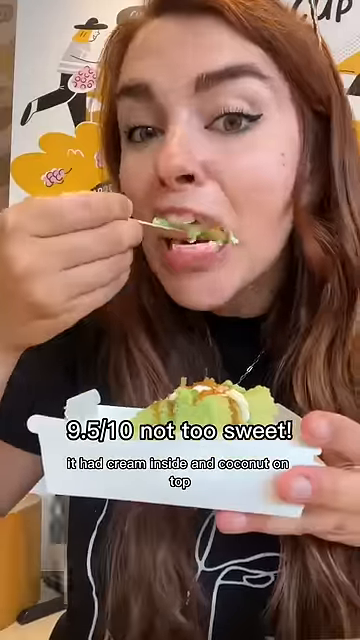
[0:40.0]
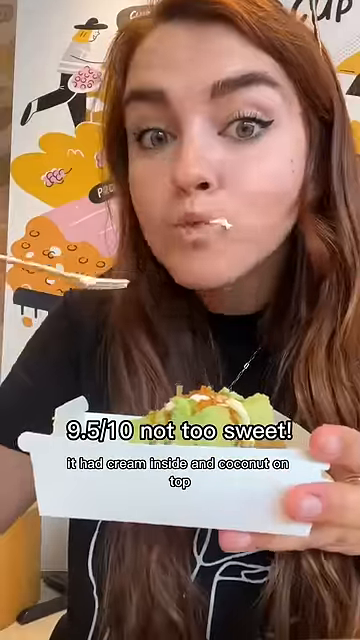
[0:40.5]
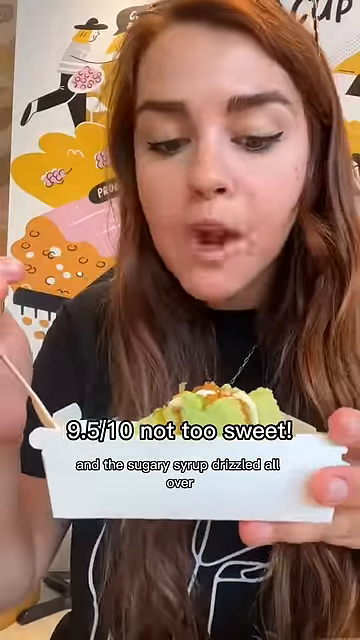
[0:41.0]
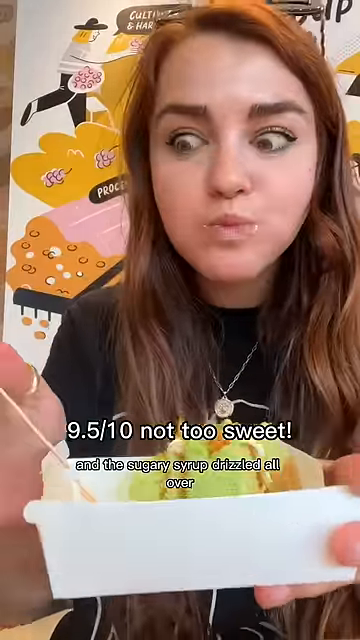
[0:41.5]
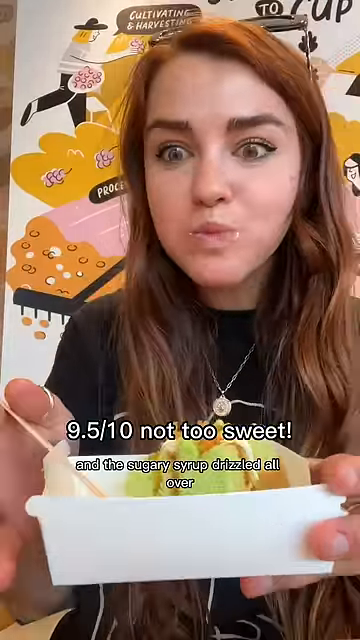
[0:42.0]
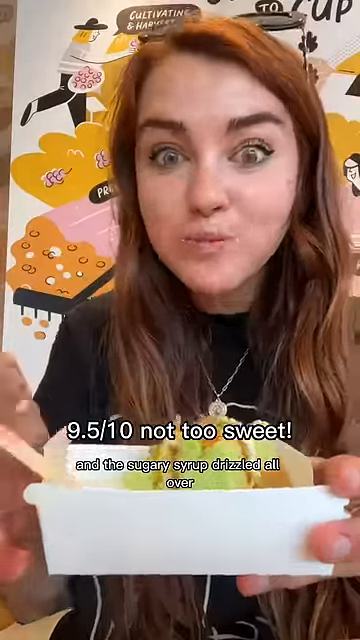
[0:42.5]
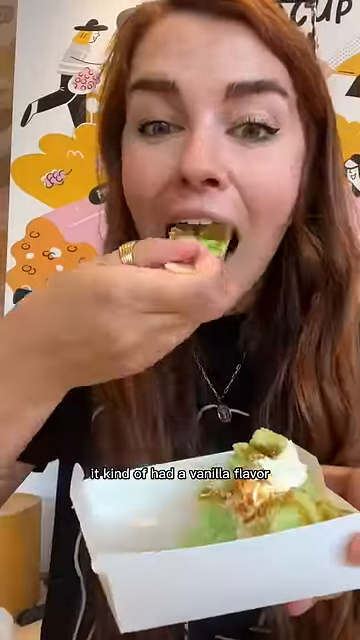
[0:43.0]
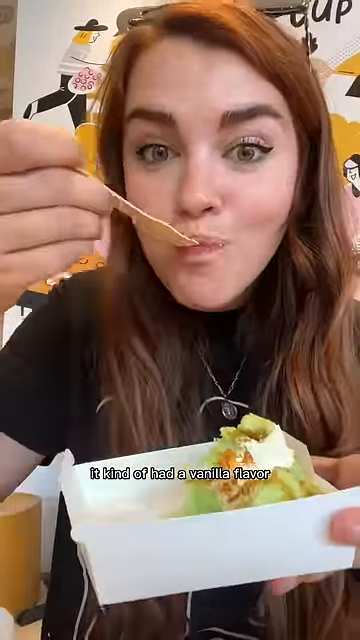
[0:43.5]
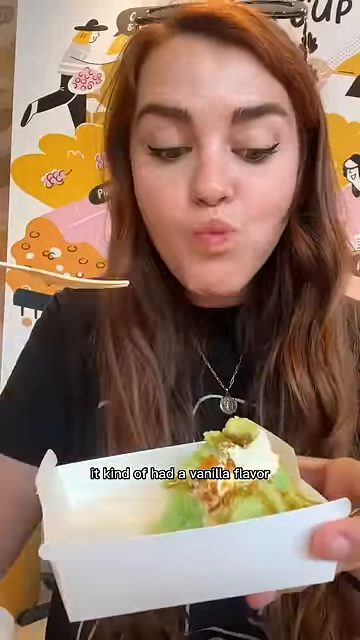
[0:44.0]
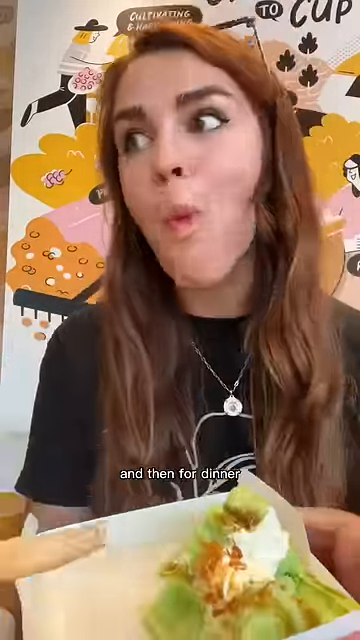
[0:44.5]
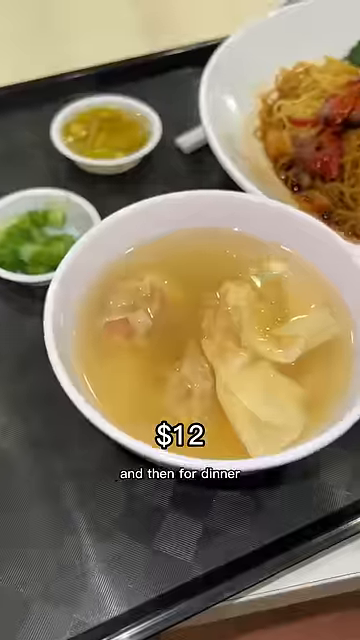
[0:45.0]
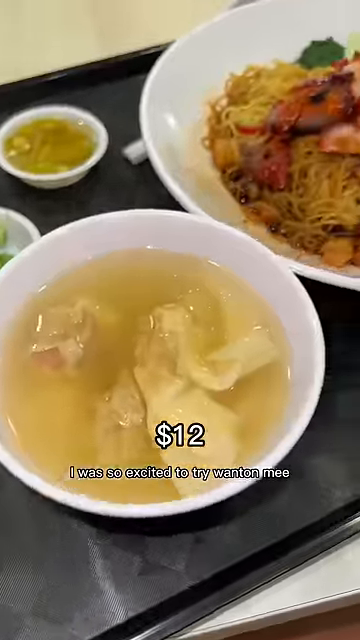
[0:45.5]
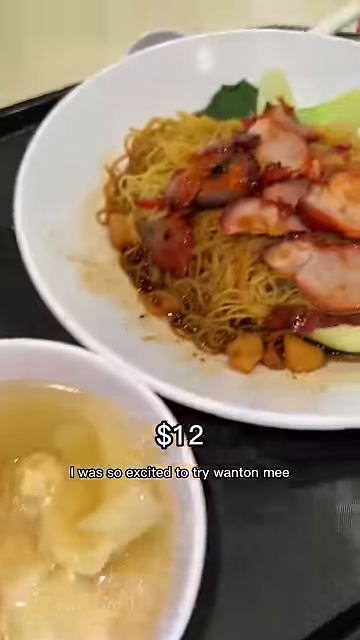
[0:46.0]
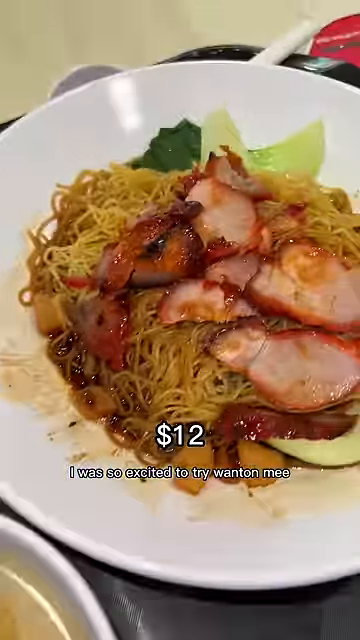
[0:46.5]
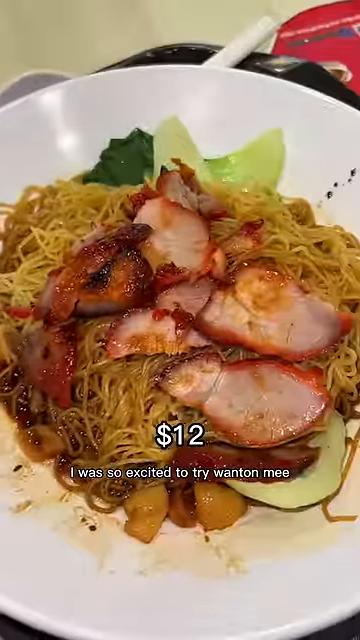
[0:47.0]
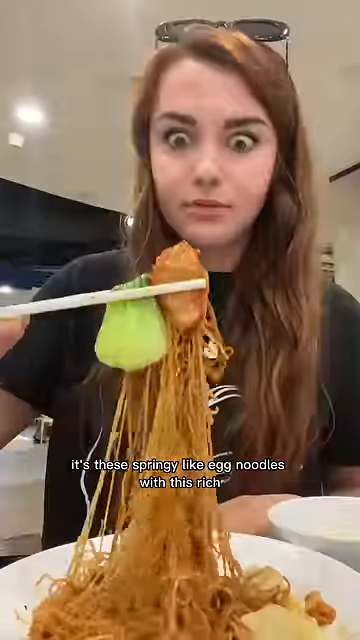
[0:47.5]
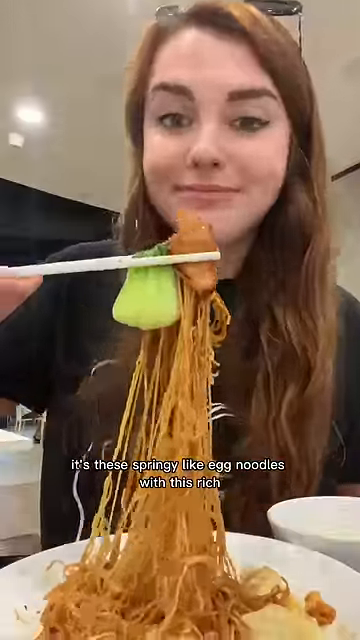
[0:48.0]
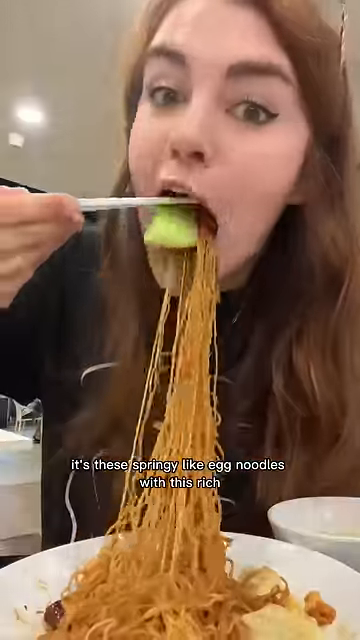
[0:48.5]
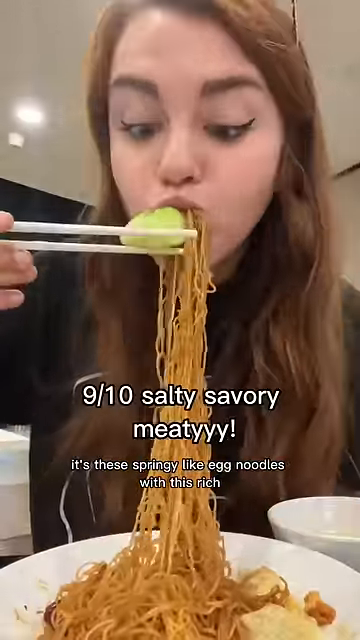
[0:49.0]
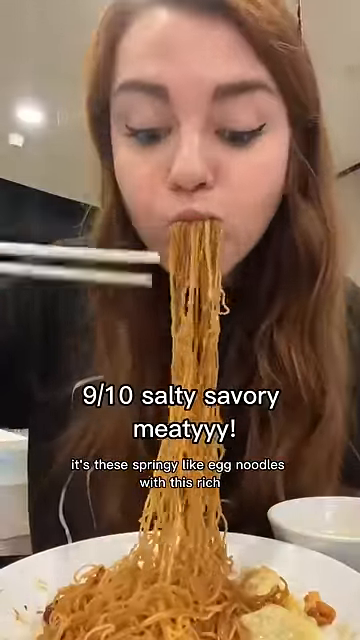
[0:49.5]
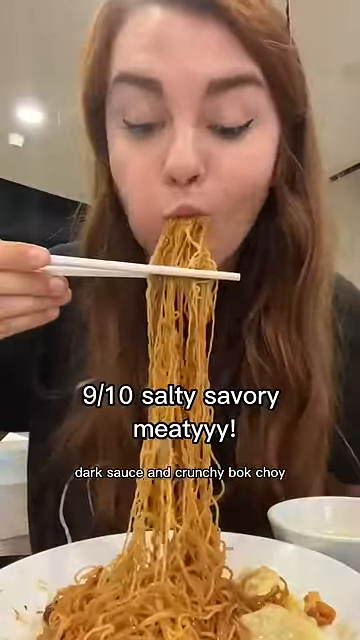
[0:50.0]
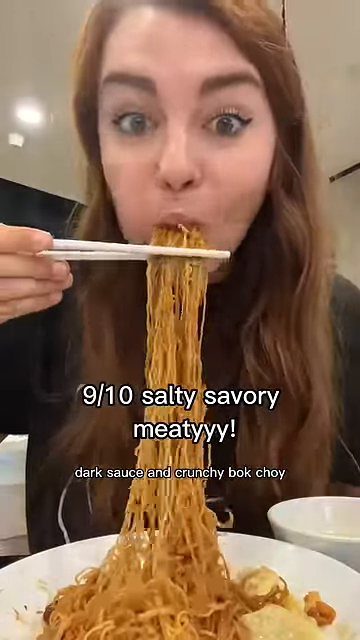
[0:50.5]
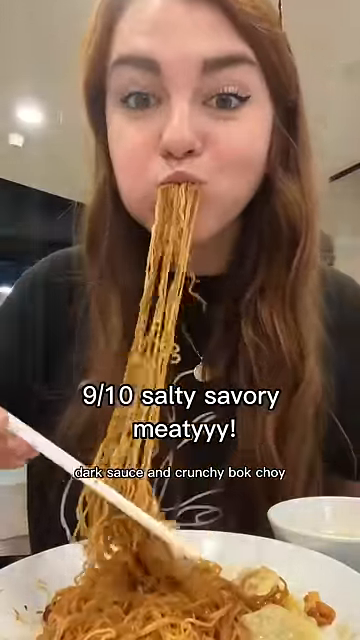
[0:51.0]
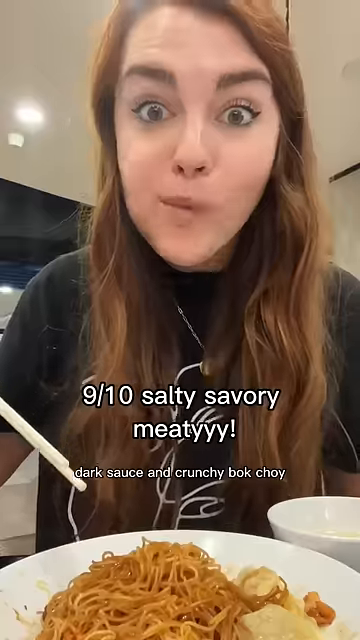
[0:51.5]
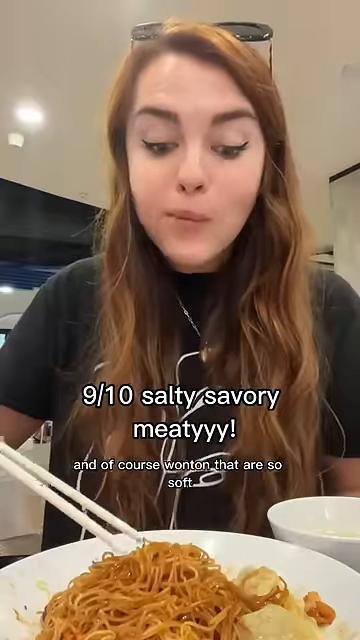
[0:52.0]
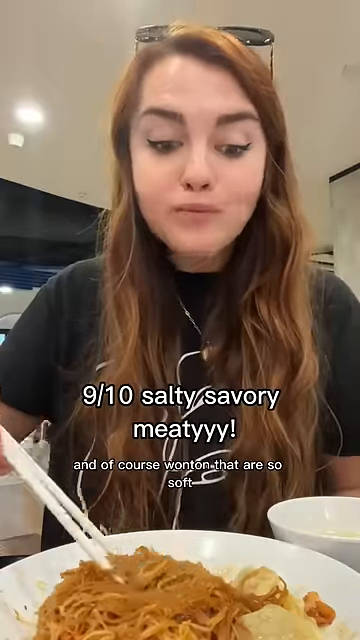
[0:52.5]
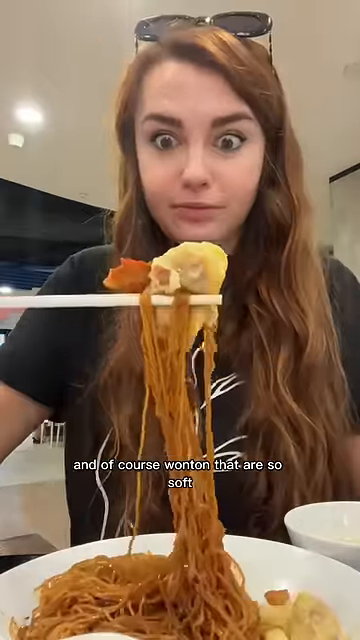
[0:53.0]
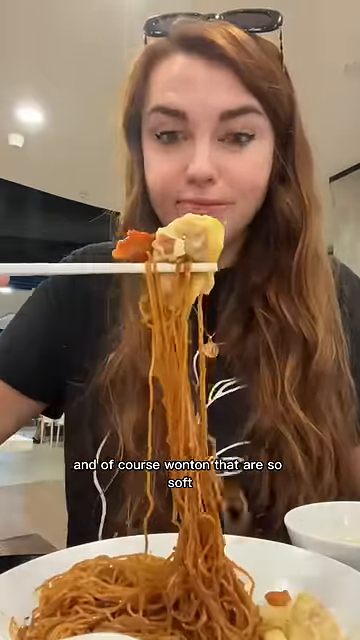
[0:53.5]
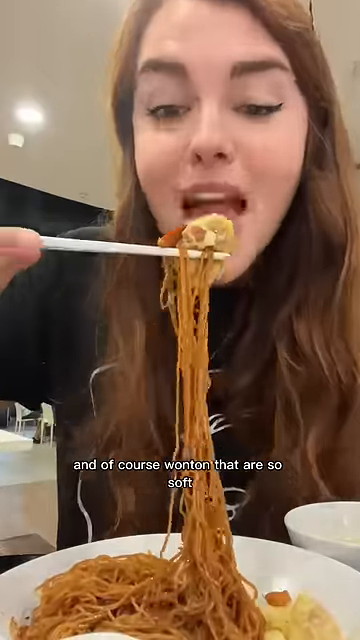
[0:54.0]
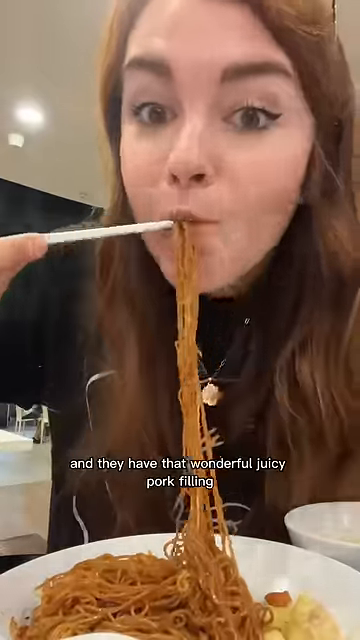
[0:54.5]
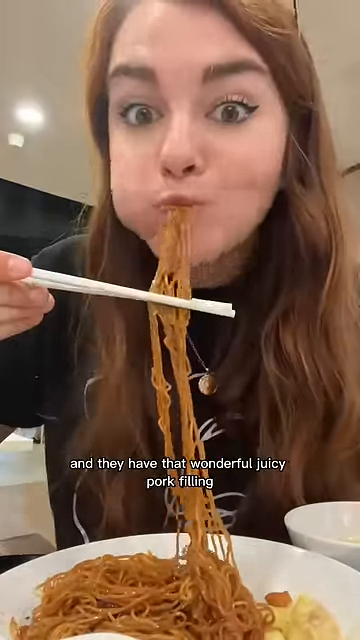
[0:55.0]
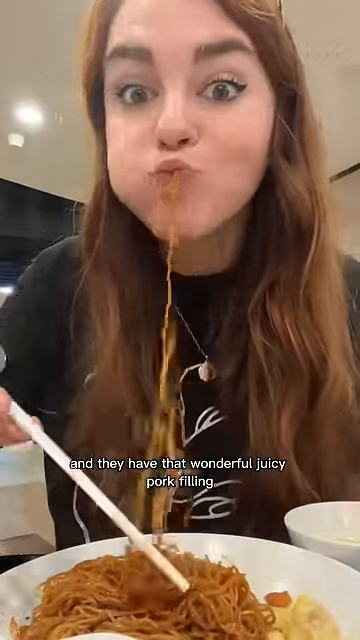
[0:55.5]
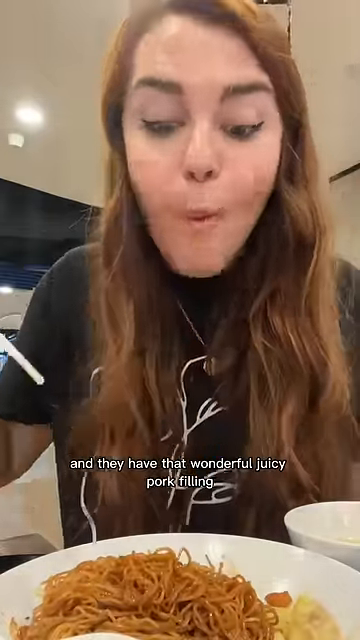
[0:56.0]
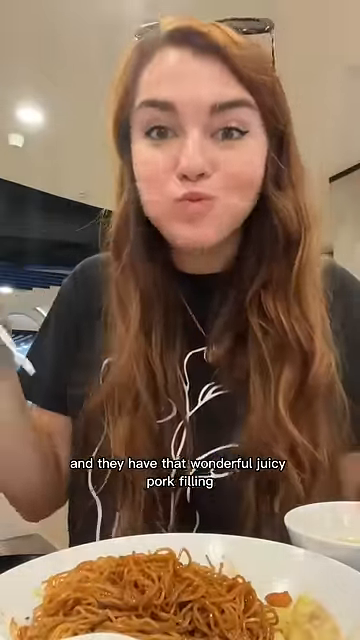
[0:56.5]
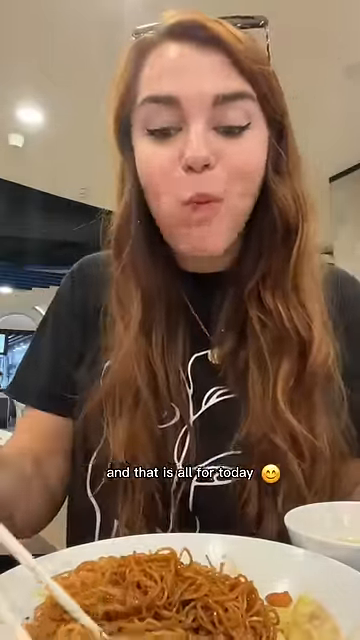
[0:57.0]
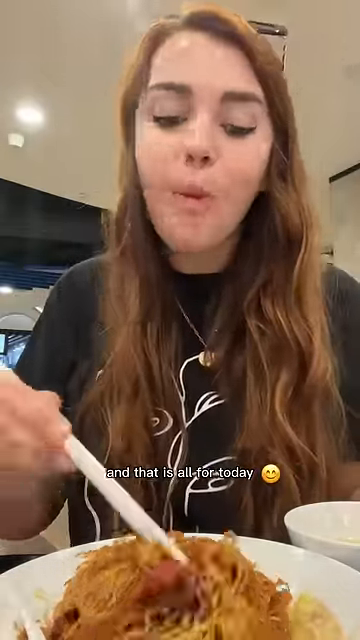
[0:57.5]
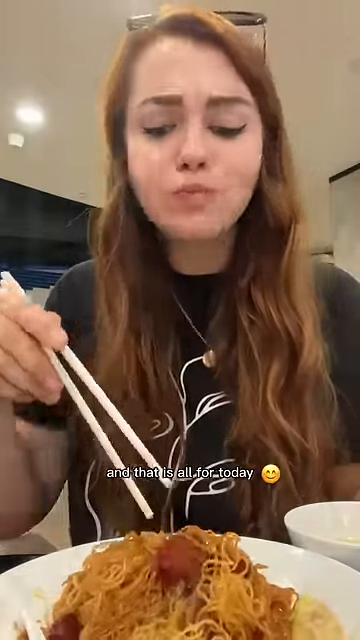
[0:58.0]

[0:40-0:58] The woman eats the cake, and then eats a whole other dish, some kind of Singaporean noodle stir fry: wonton egg noodles with crunchy bok choy and very soft wontons. While she eats the noodles, her cheeks kind of flare out like a chipmunk's. Her face shows she is extremely excited: her eyes are wide, she is smiling, and her brows furrow in pleasure, and she clearly enjoys the food.